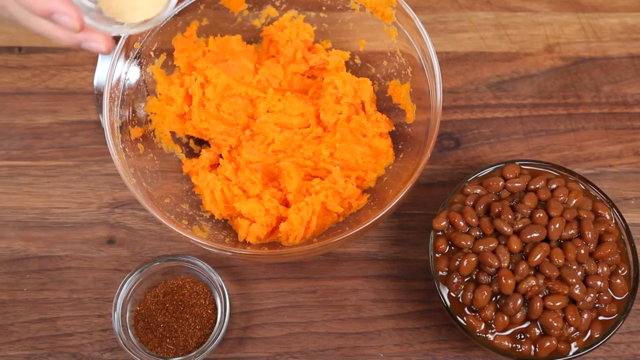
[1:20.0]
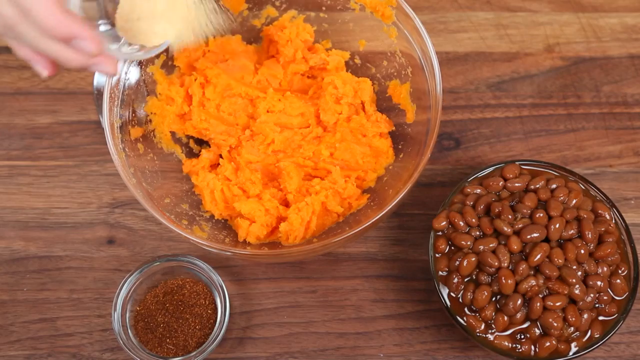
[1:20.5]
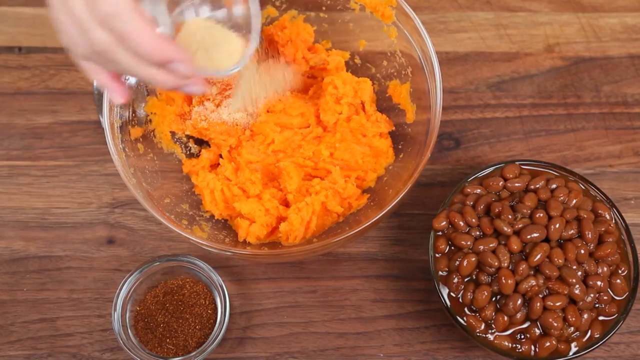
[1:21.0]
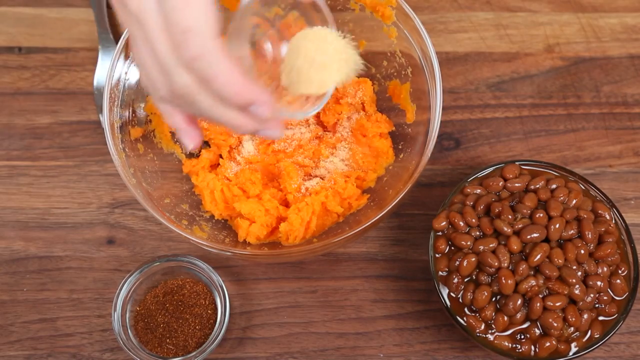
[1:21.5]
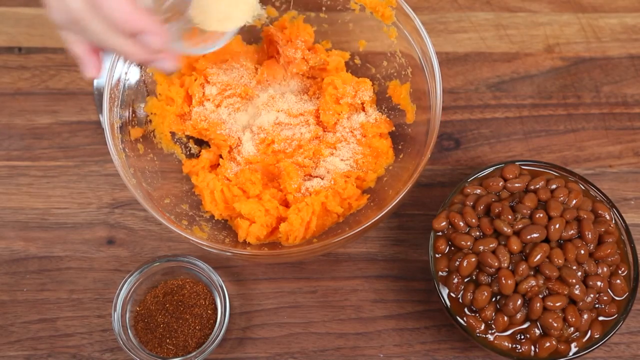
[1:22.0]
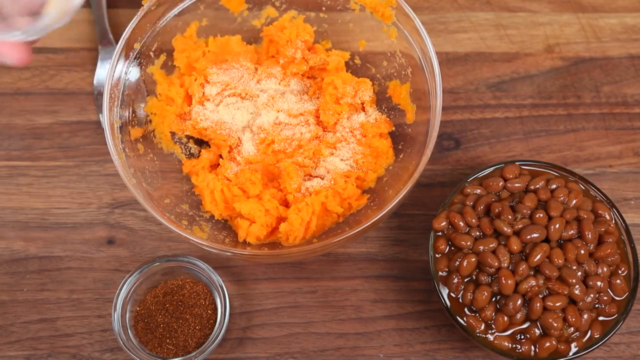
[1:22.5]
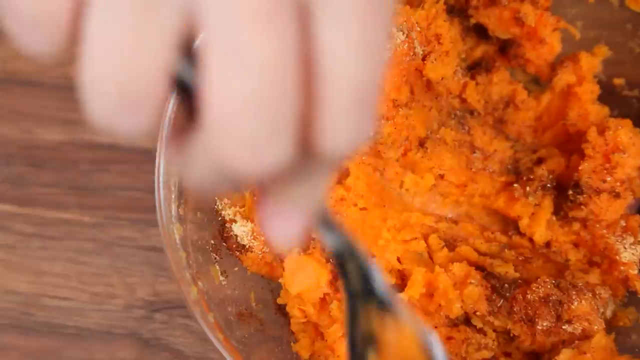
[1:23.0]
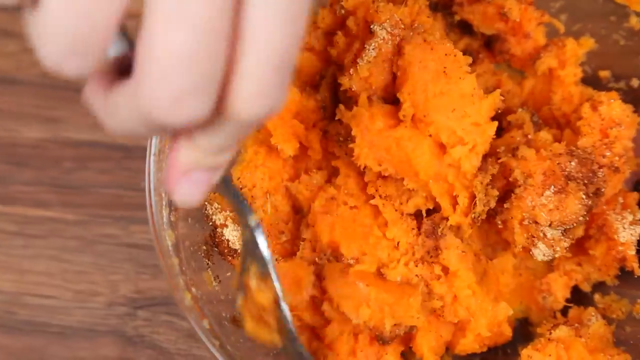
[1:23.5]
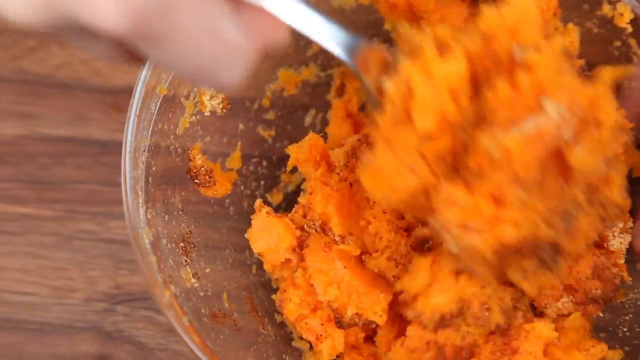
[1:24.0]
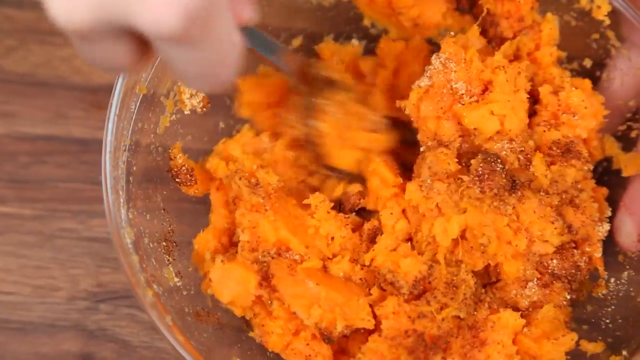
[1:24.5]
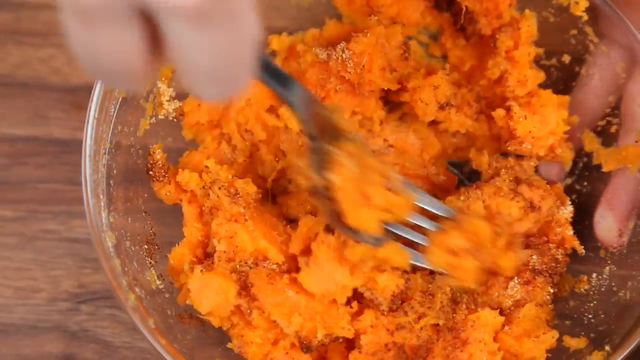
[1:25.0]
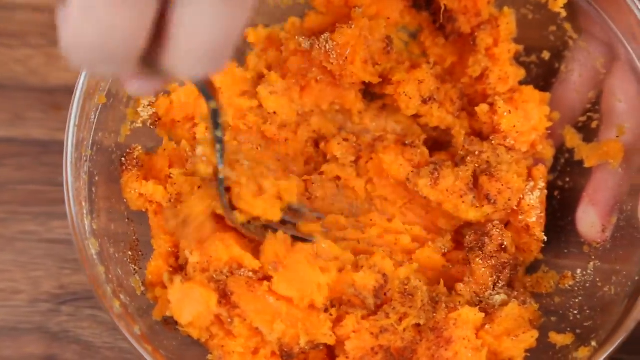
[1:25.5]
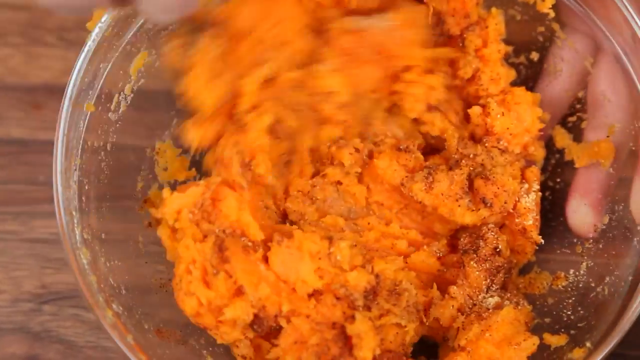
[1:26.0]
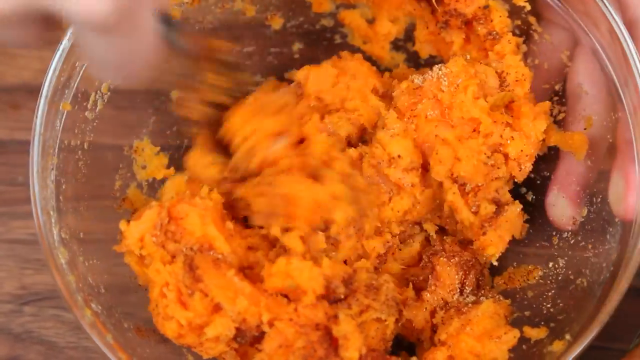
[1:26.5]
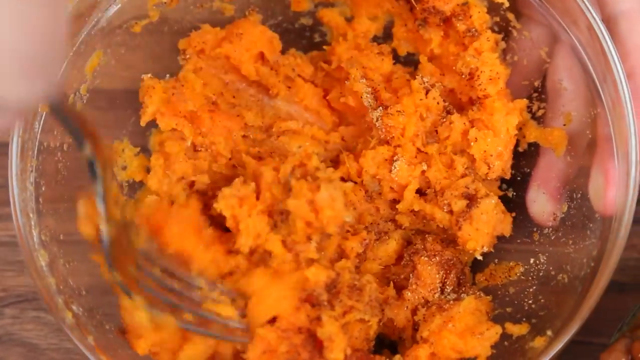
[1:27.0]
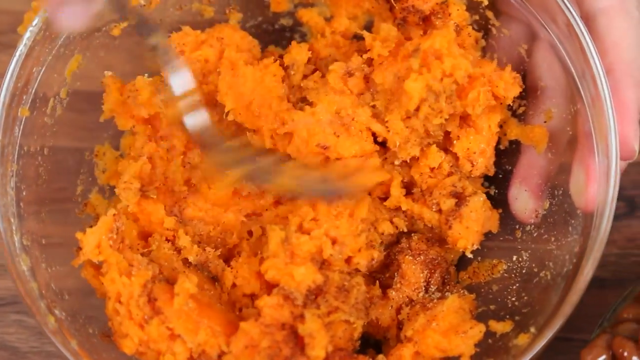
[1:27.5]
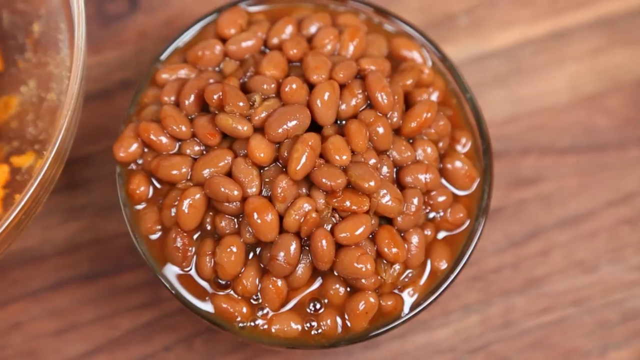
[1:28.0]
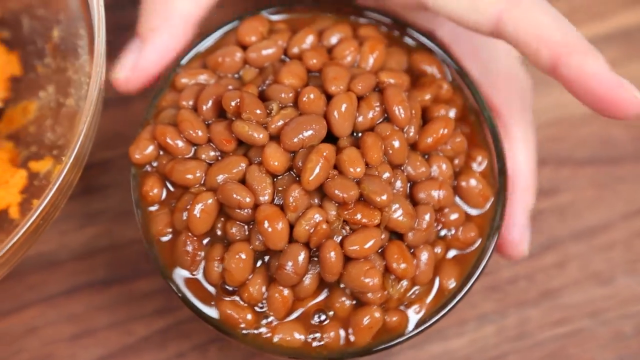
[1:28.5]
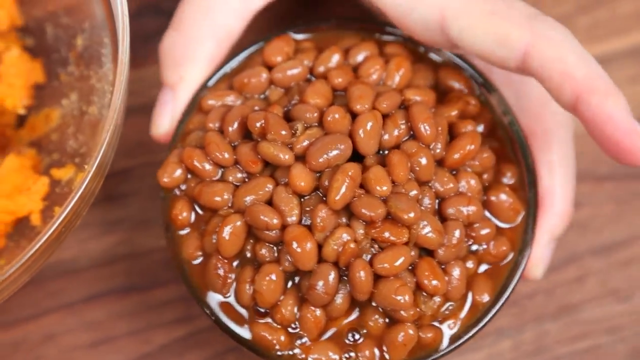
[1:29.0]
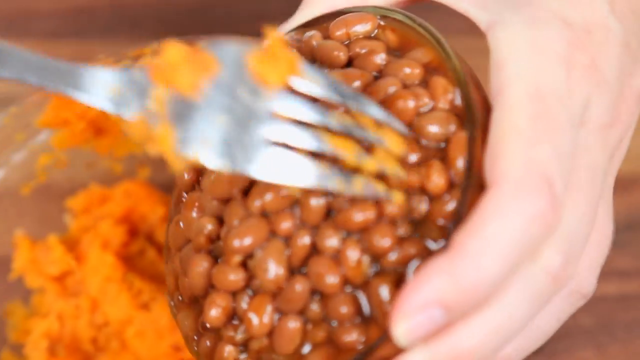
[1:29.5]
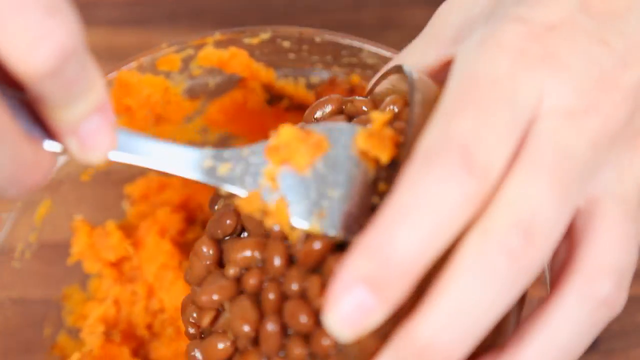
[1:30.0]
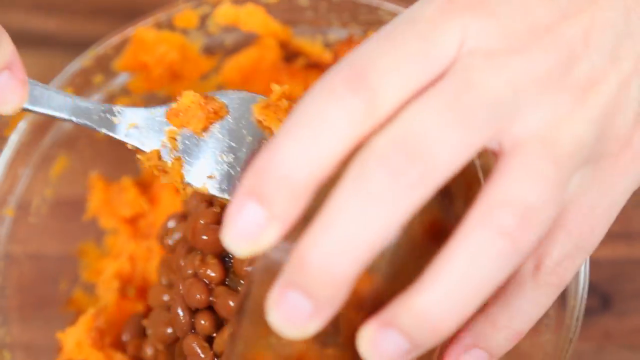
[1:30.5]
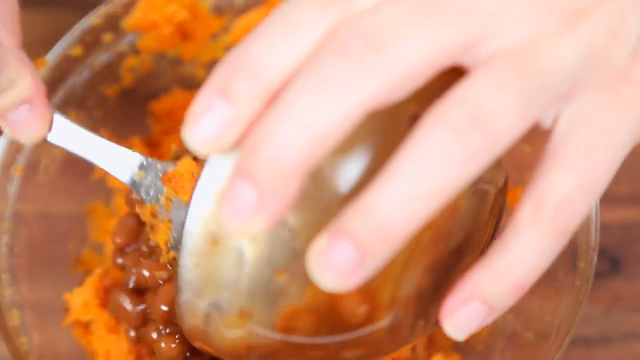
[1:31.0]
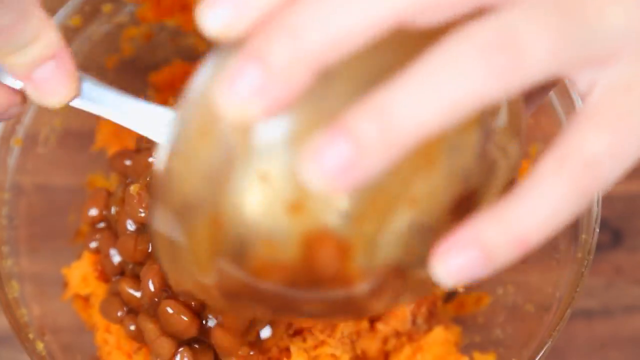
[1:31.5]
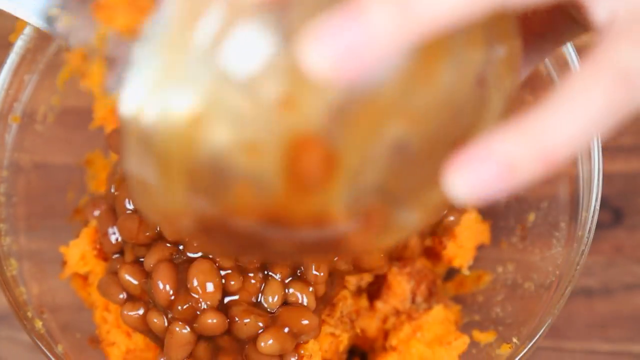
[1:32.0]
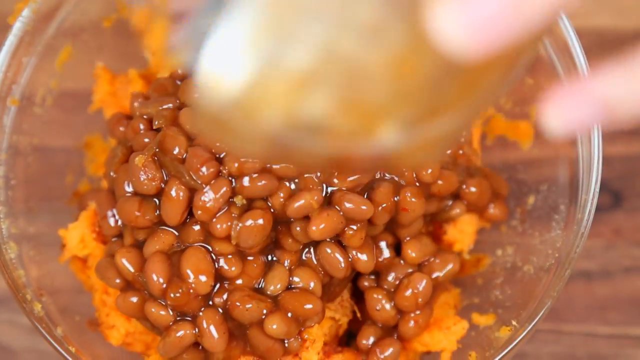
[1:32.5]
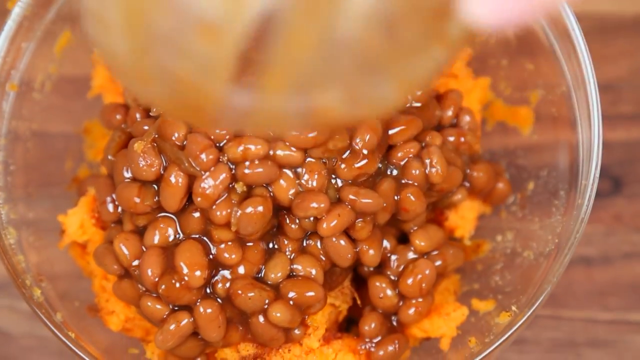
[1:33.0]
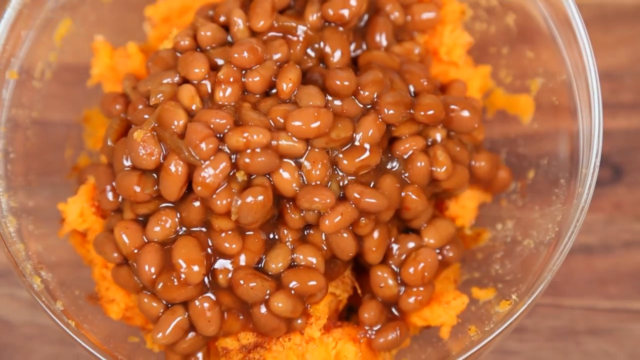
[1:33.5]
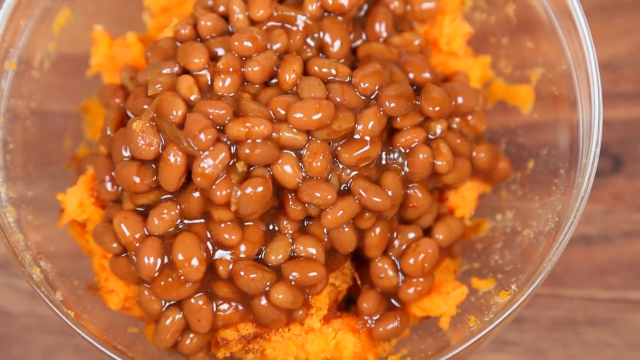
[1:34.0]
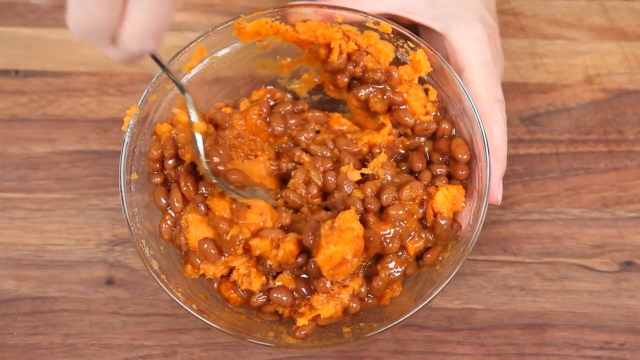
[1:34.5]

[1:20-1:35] It cuts to a scene at the brown table with three bowls: a medium bowl with brown beans, a small bowl with brown powder, and a big bowl with the orange sweet potato insides. The woman grabs the small bowl that contained the garlic powder and dumps it into the bowl with the sweet potato. She then takes the fork and mashes the sweet potato more, her left hand gripping the bowl. She then grabs the medium bowl of brown beans with her left hand and uses the fork, with some sweet potato on it, to put the beans into the big bowl, dumping in the whole contents and continuing to mash the sweet potato with the brown beans. The camera sometimes pans from right to left or left to right. The beans are kind of wet, with some moisture visible; they are not dry.